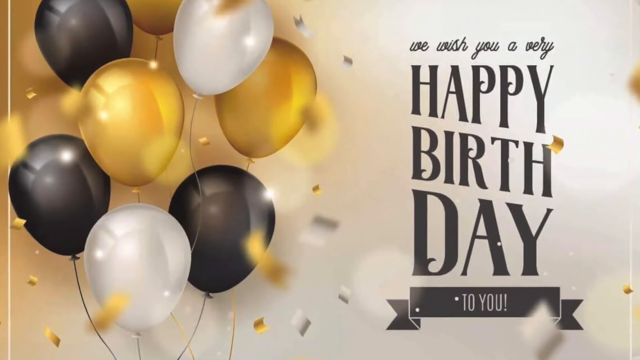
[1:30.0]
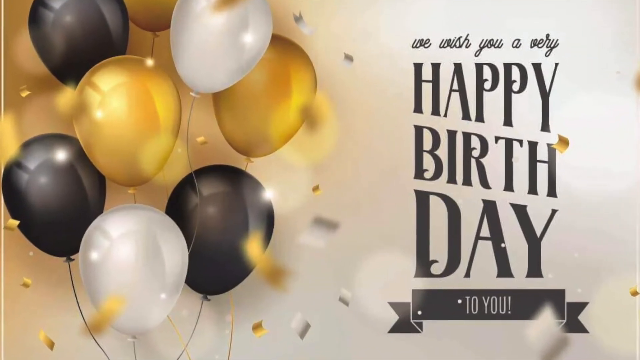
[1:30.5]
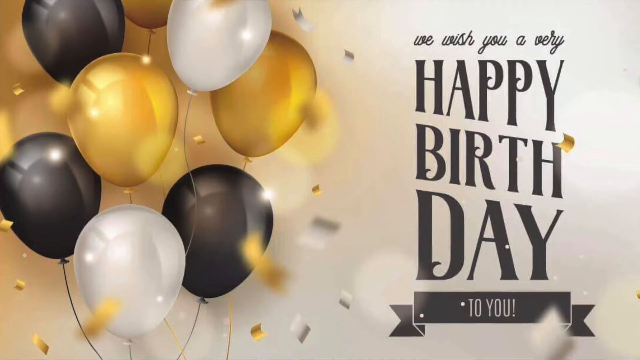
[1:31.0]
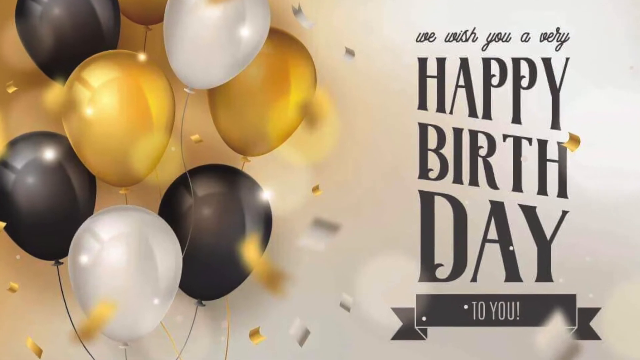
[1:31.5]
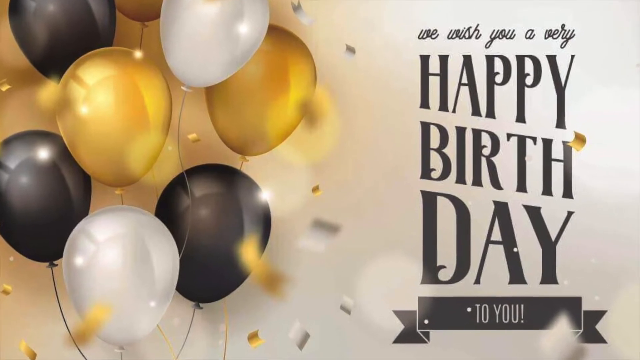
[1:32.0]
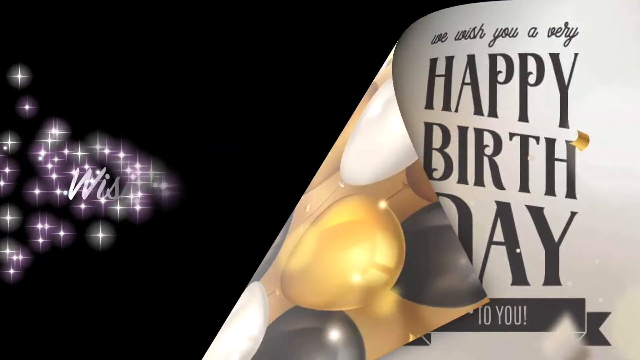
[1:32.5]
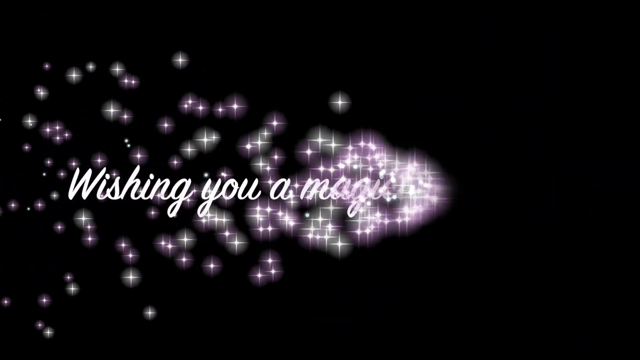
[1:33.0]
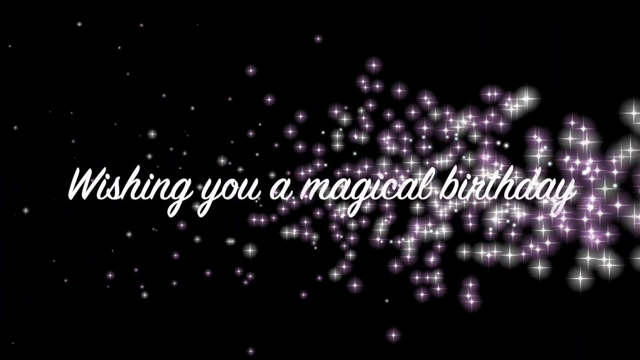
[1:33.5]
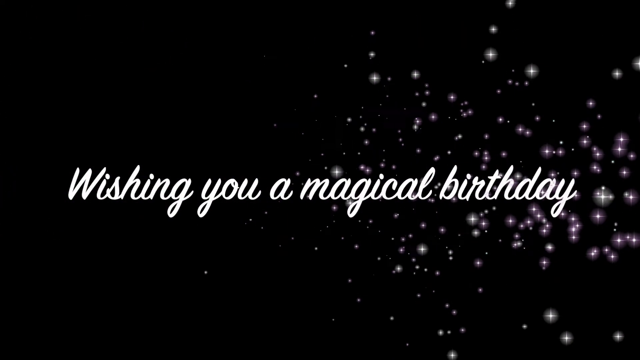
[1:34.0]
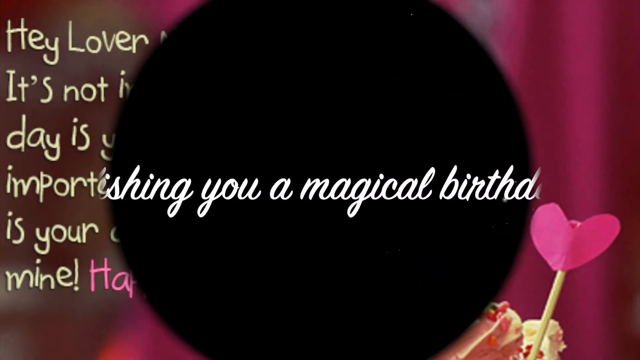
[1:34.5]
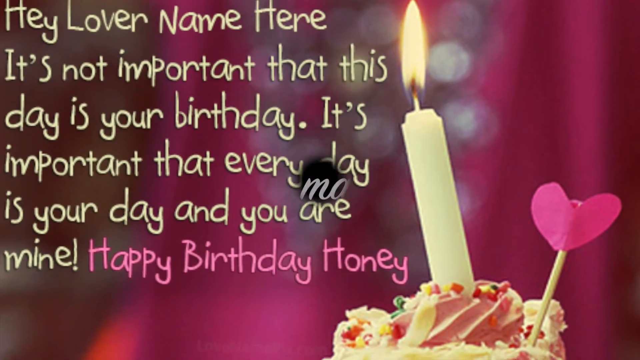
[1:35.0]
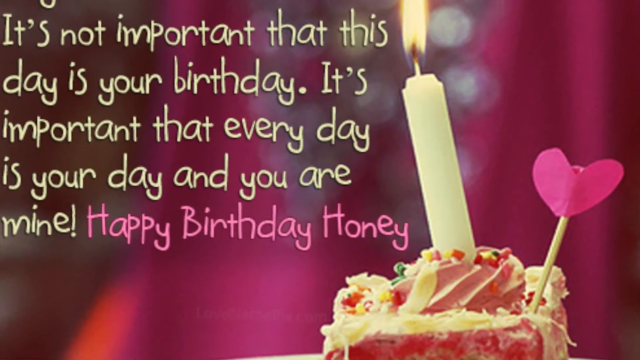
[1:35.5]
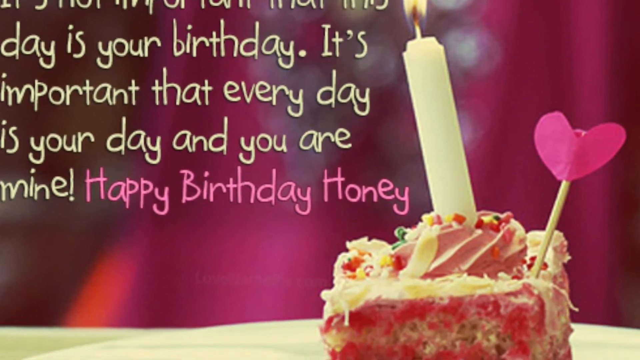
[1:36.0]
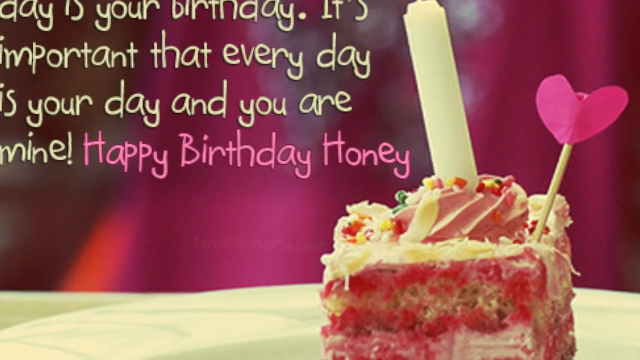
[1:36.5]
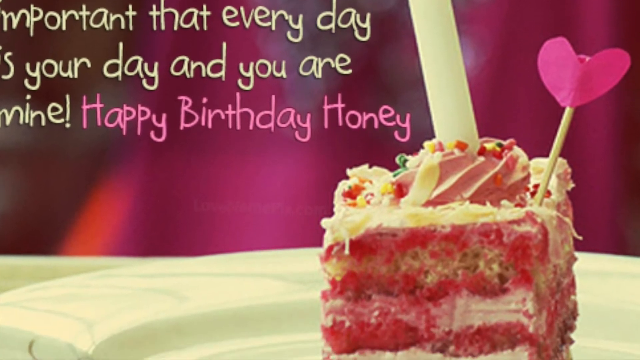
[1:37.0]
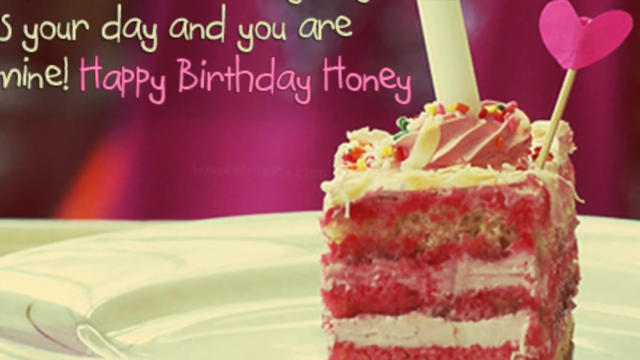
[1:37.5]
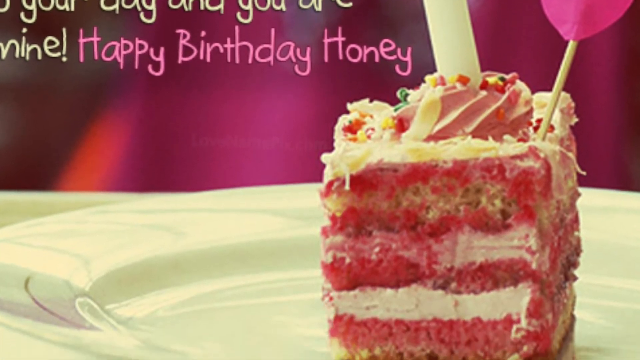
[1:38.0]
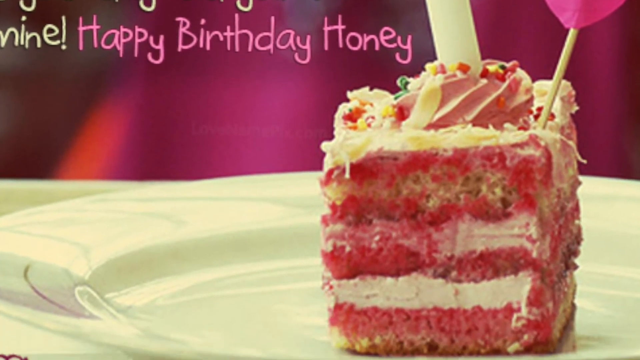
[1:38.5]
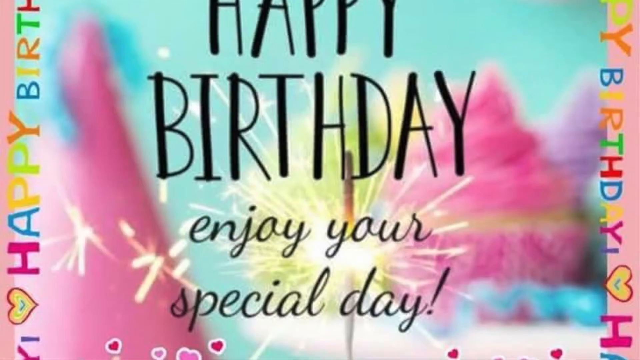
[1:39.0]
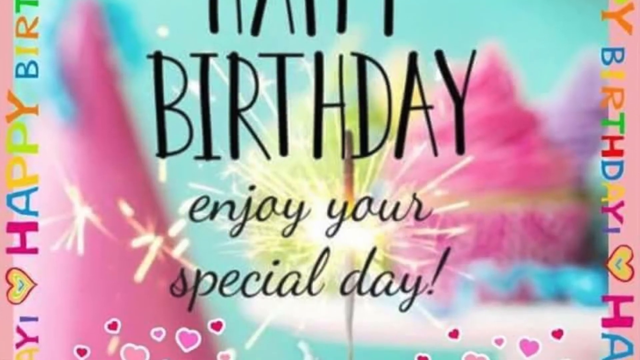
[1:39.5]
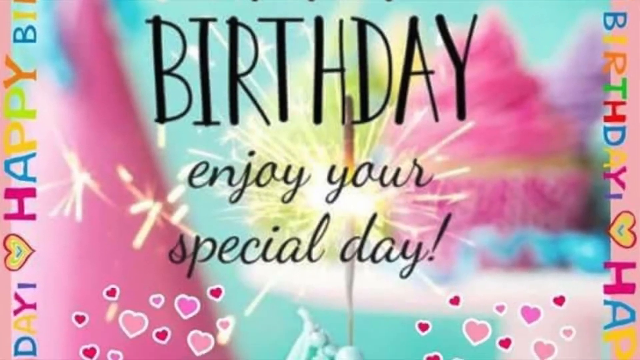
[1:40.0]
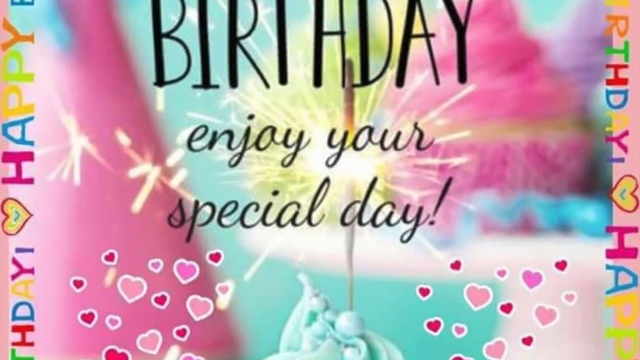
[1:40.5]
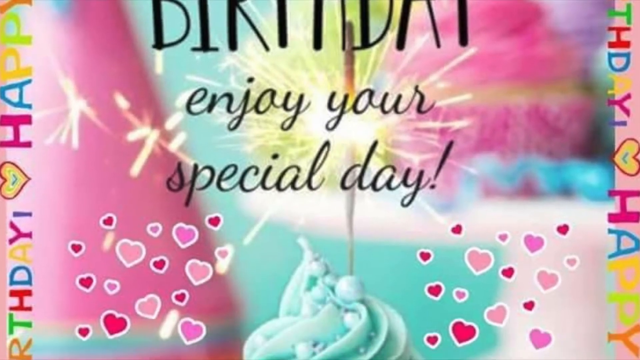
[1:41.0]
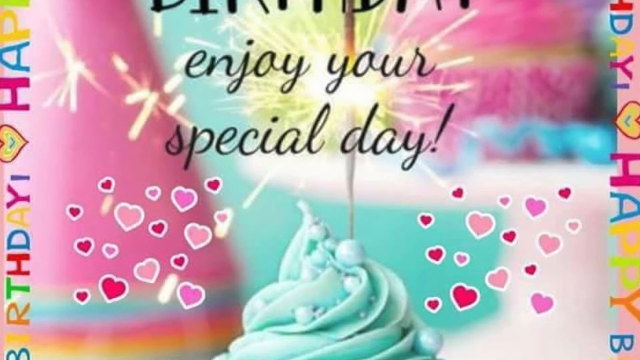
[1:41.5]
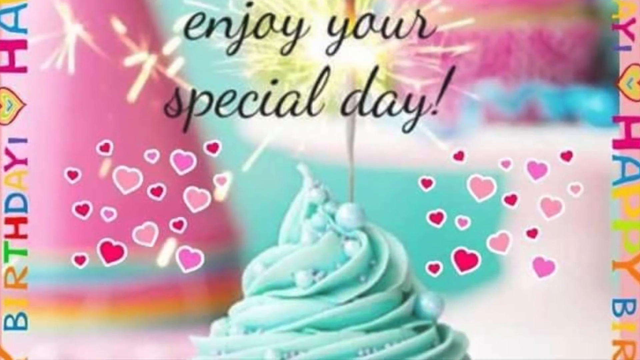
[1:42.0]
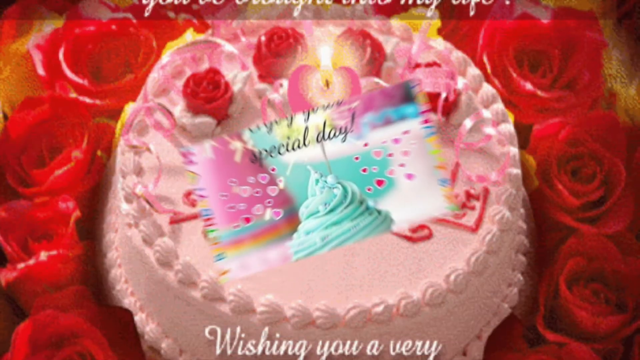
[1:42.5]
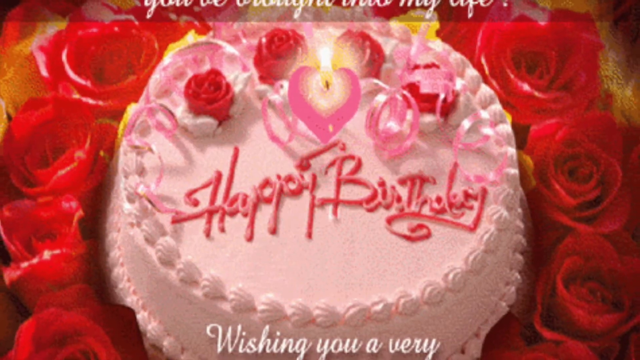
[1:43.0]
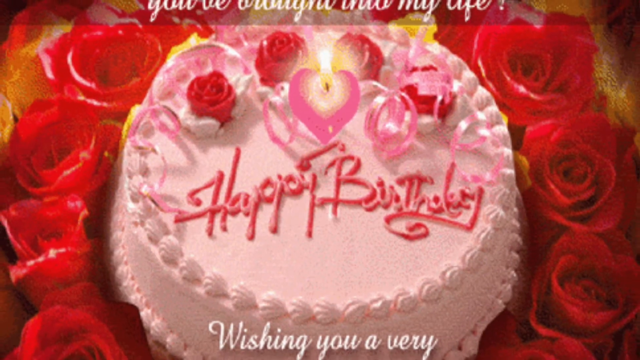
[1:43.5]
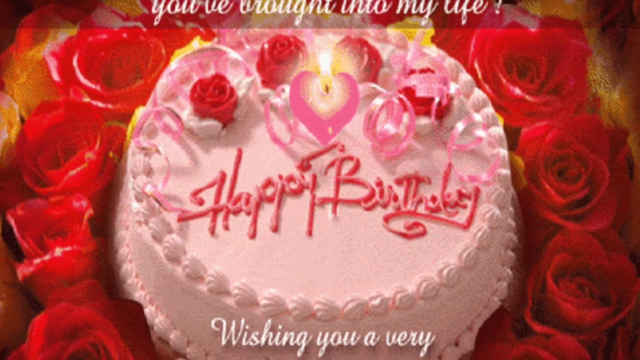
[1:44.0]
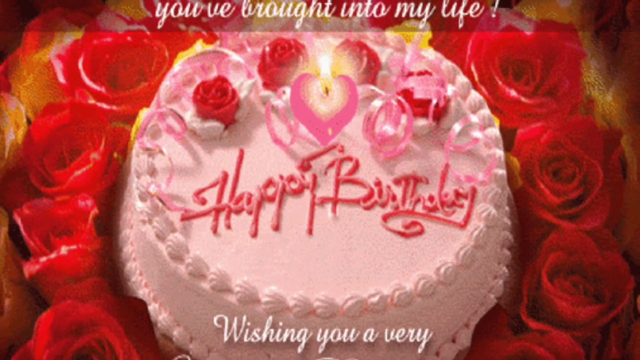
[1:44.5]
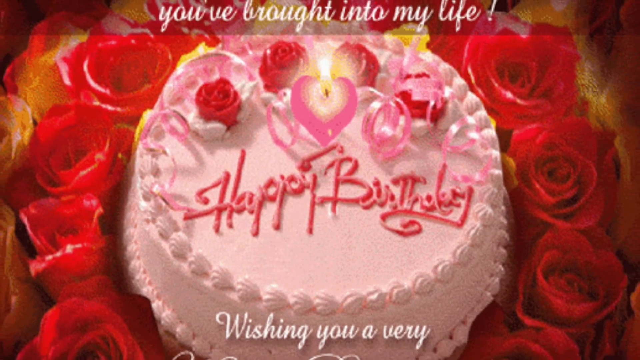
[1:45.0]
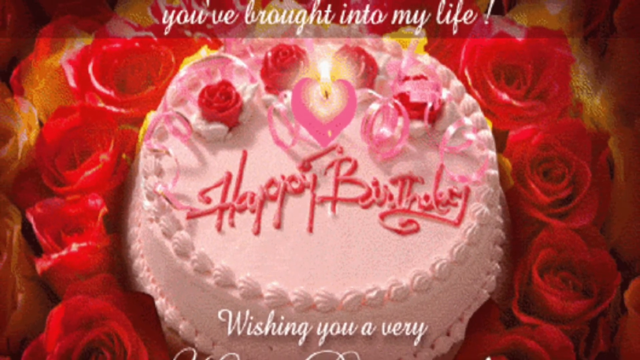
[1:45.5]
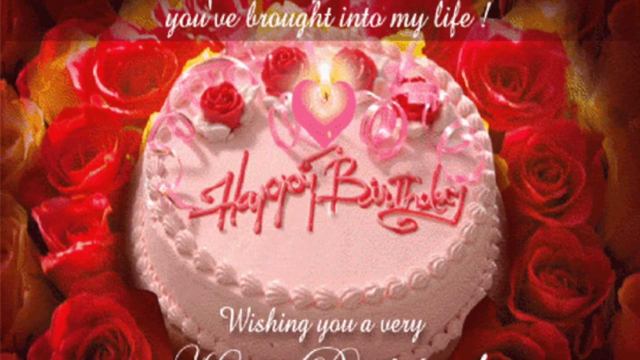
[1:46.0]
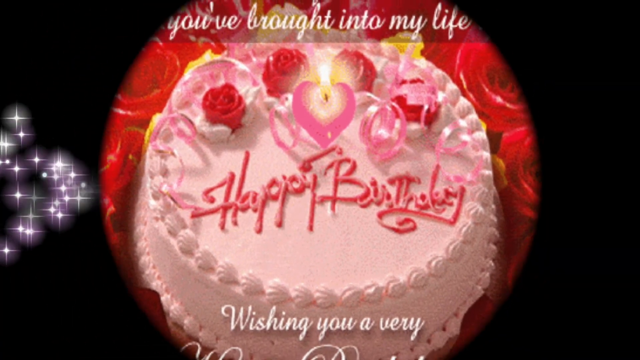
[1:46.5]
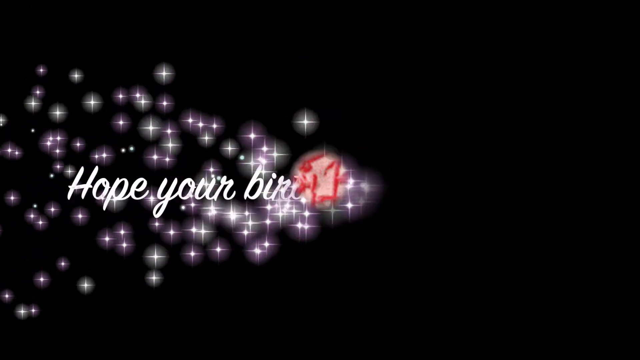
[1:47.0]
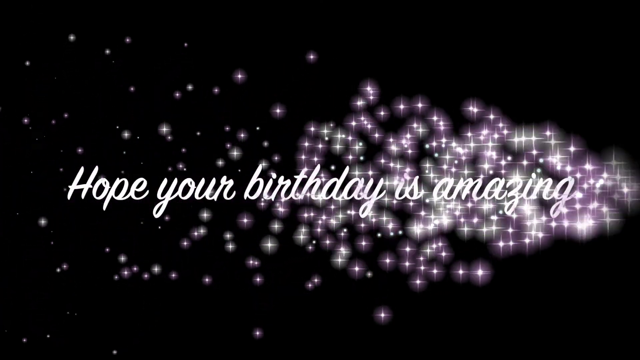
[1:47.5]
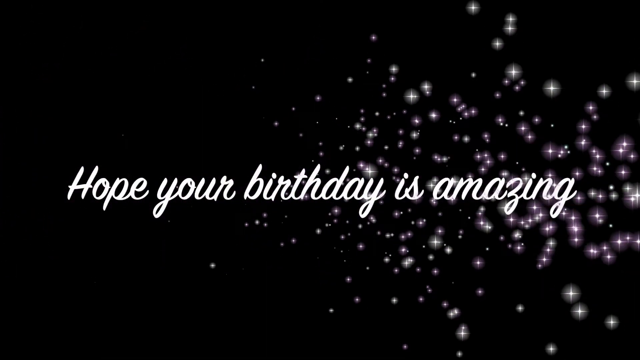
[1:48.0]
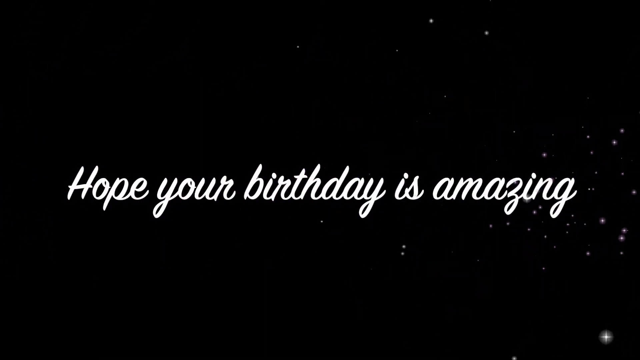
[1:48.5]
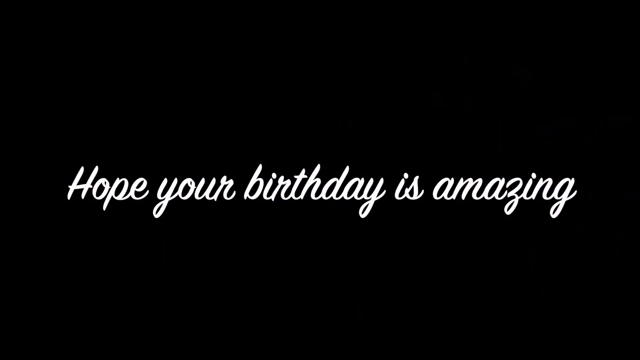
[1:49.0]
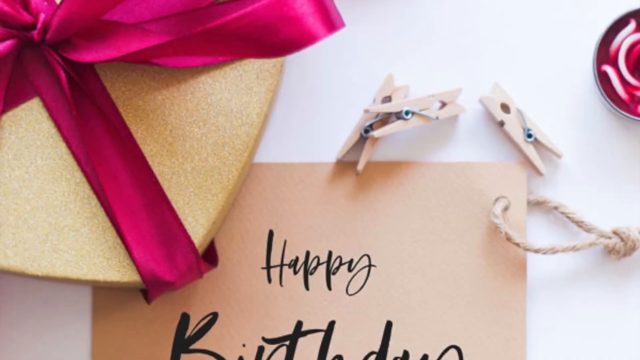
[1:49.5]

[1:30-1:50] The card reads "we wish you a very" in one font, "happy birthday" as three separate words in a different font, and "to you" on a banner in a third font, with white, gold and black balloons to its left in the frame. The view sweeps in, then a tearaway cut leads to a black screen with a sparkle effect revealing "wishing you a magical birthday." It immediately sweeps to a different card that says "hey, lover, name here. It's not important that this day is your birthday. It's important that every day is your day, and you're mine, happy birthday, honey." "Happy birthday honey" is in a pink font and the rest is in a yellow font. A lit candle and a heart on a stick stick out of a cake that is mostly out of frame, with a blurred, bokeh-like background. The view sweeps up to reveal that they are coming out of a slice of cake on a plate. The video cuts to another picture that says "happy birthday, enjoy your special day" in black text on a blurry blue background with more cake, also blurred, and lots of little hearts. This changes to an image of a pink-white cake that says "happy birthday," frosted with red and pink hearts and flowers and surrounded by piped flowers. A black background follows with the sparkly effect revealing the text "hope your birthday is amazing," then the video cuts to another card that cuts away too fast to read.